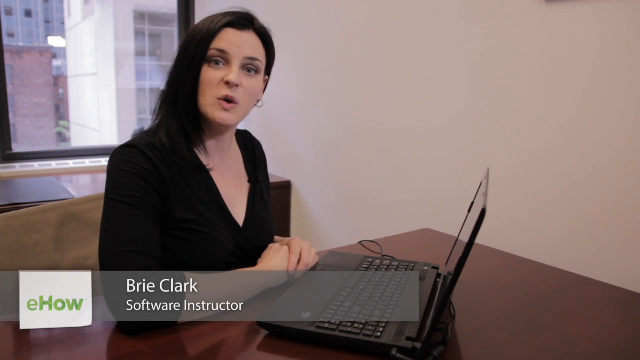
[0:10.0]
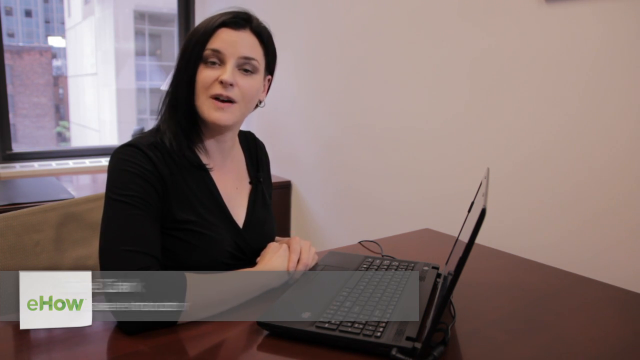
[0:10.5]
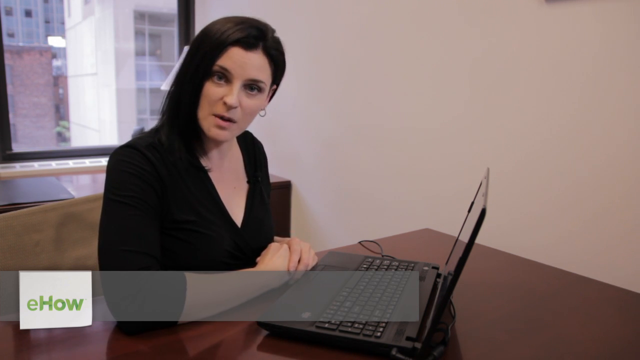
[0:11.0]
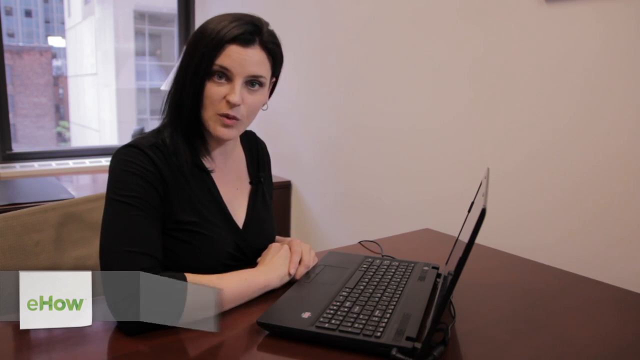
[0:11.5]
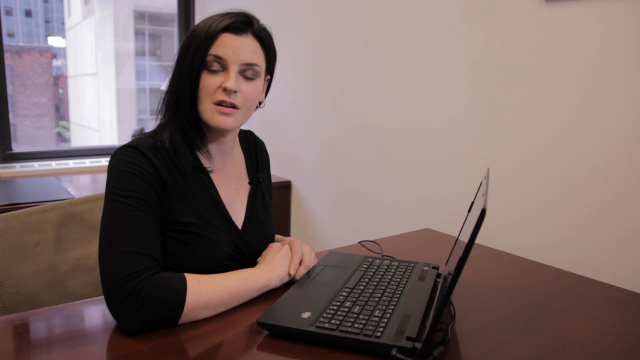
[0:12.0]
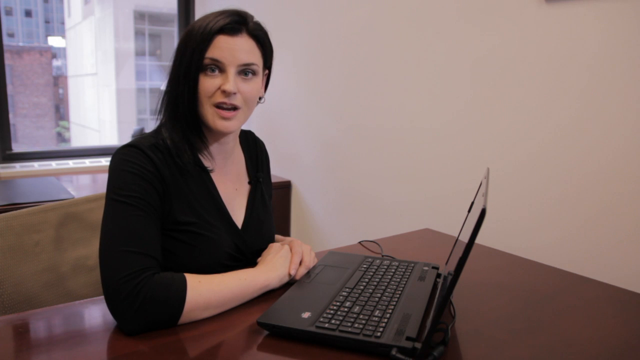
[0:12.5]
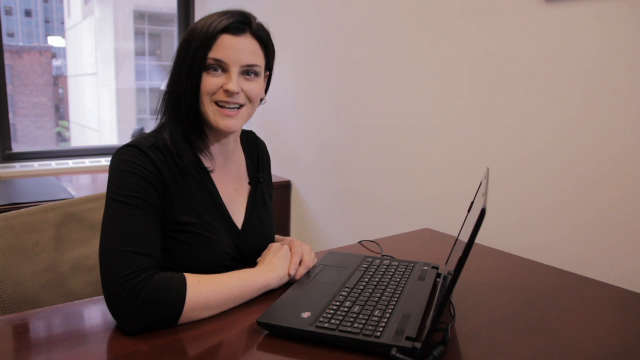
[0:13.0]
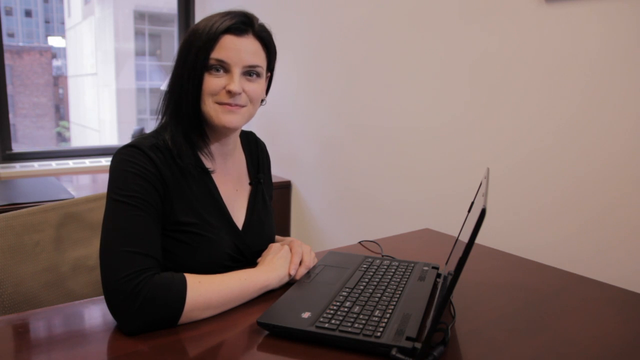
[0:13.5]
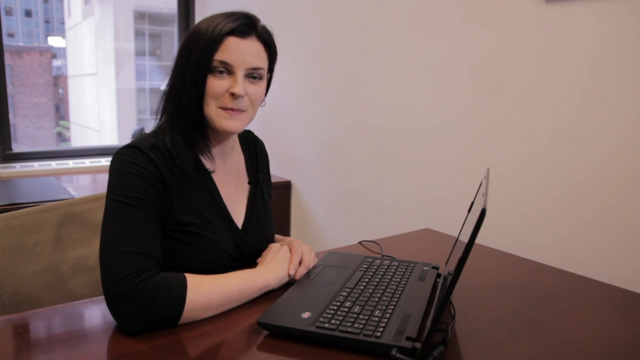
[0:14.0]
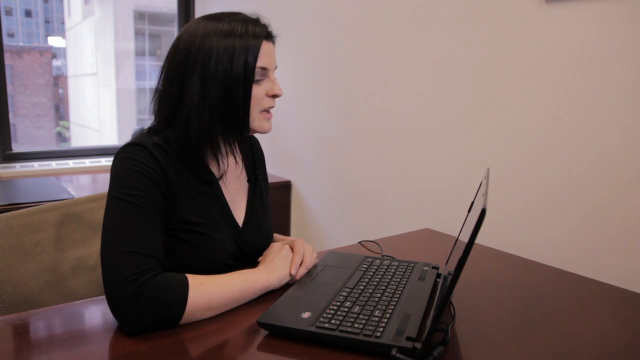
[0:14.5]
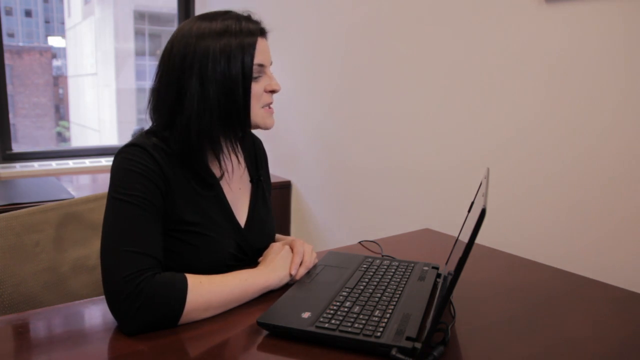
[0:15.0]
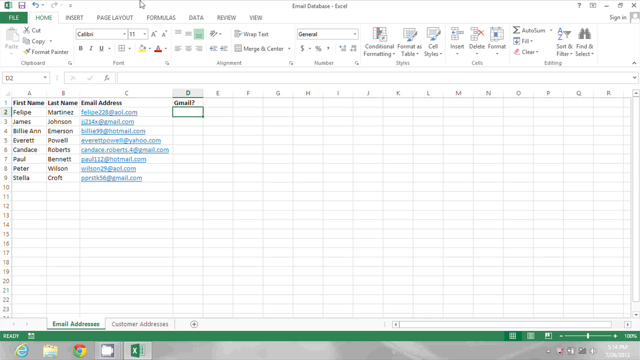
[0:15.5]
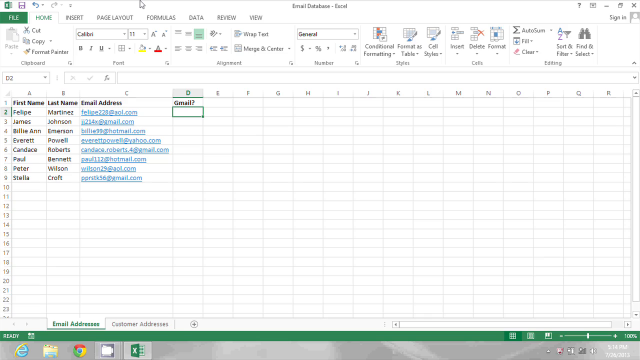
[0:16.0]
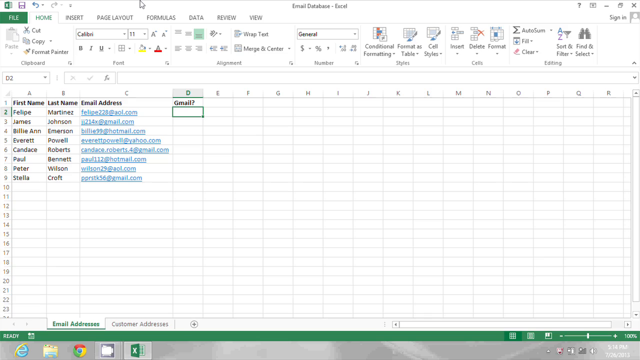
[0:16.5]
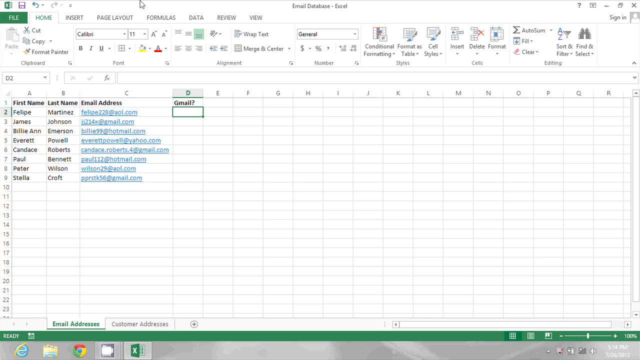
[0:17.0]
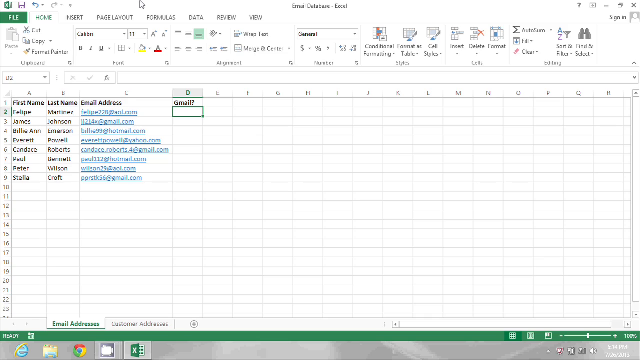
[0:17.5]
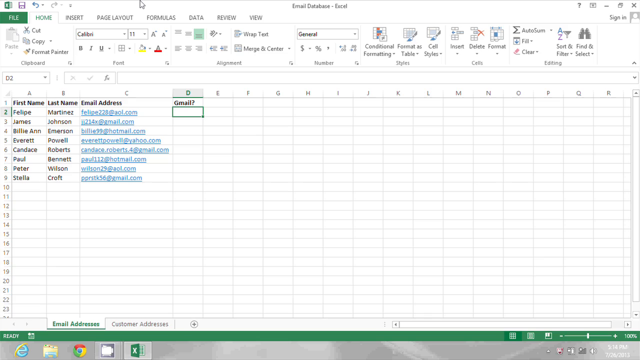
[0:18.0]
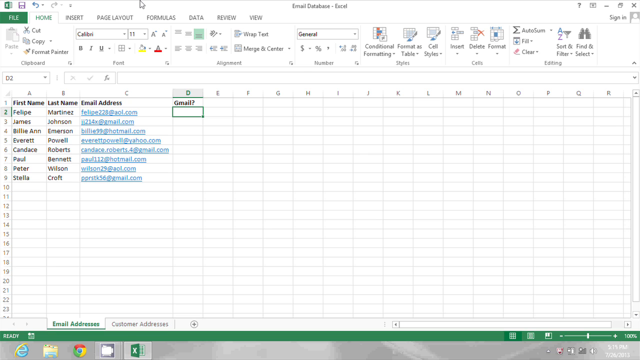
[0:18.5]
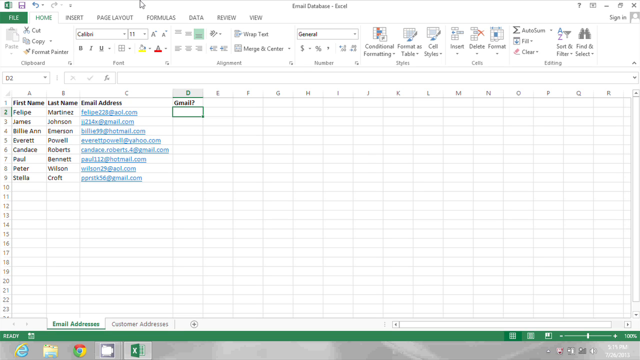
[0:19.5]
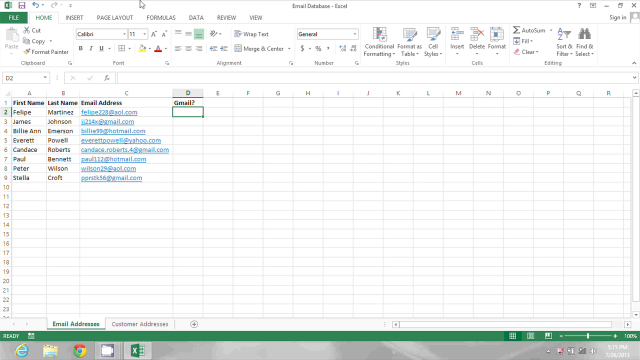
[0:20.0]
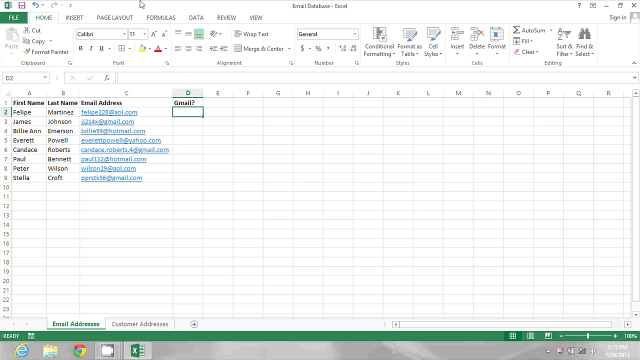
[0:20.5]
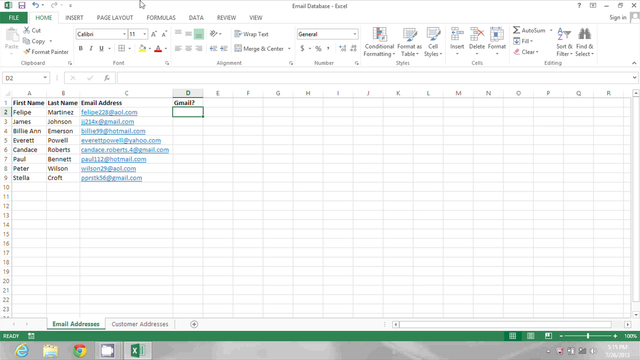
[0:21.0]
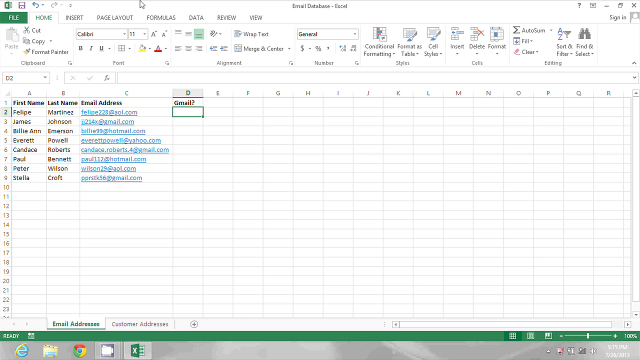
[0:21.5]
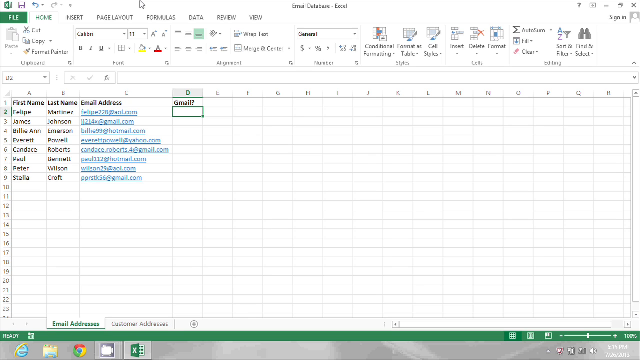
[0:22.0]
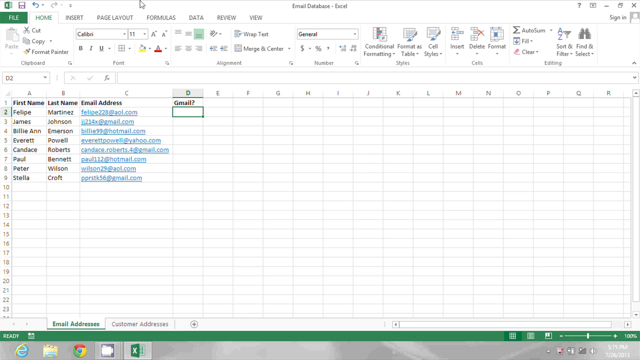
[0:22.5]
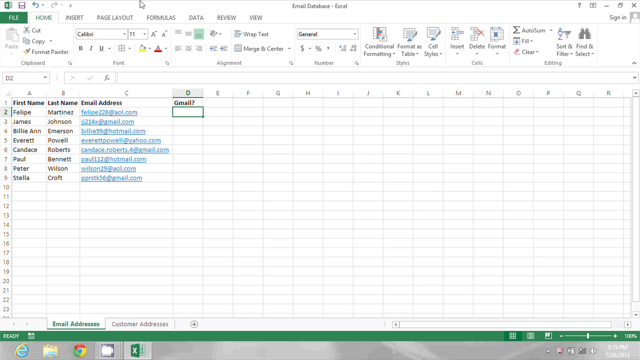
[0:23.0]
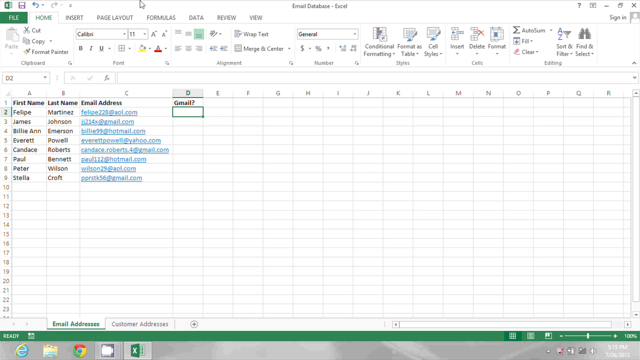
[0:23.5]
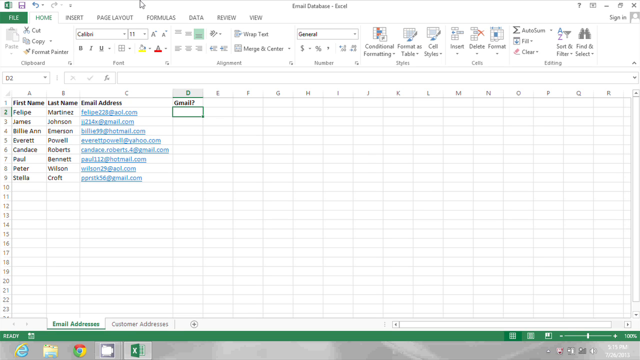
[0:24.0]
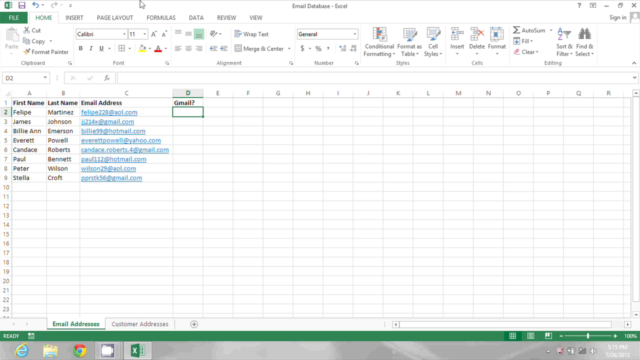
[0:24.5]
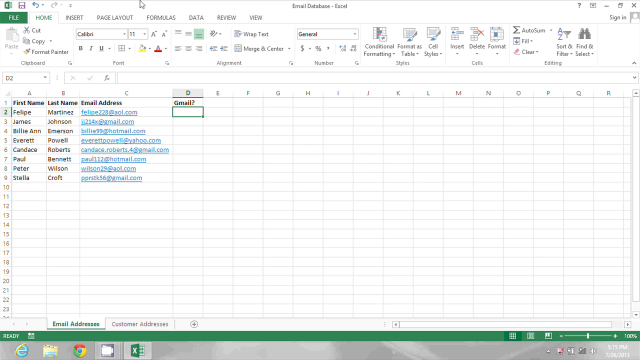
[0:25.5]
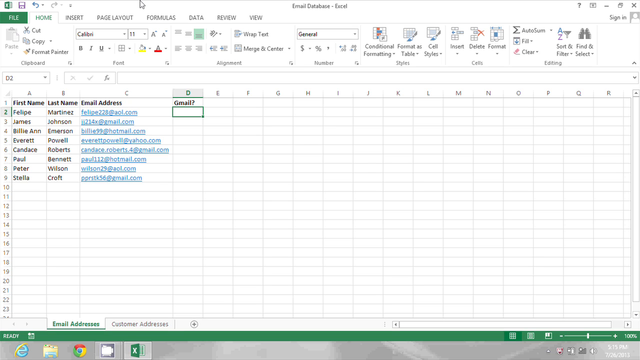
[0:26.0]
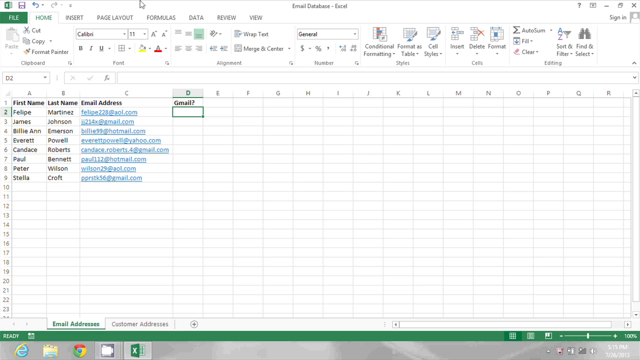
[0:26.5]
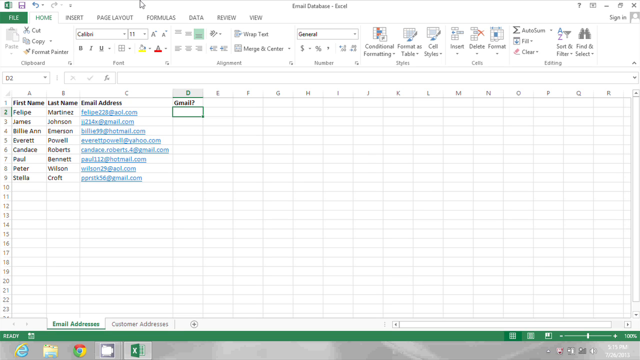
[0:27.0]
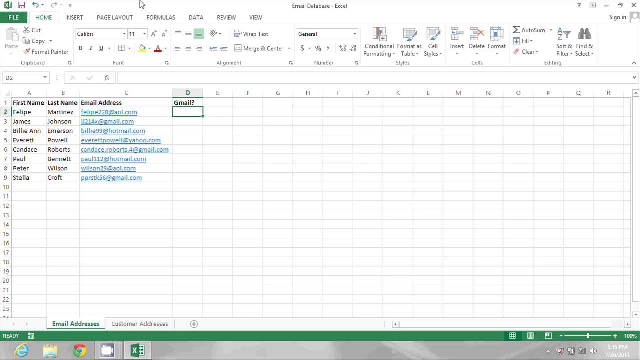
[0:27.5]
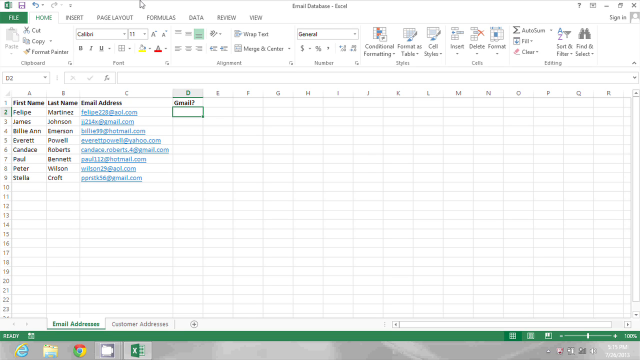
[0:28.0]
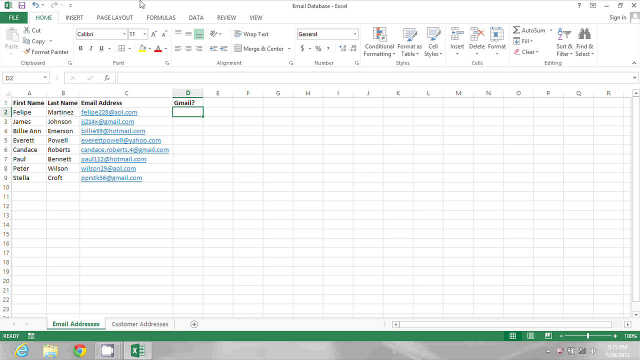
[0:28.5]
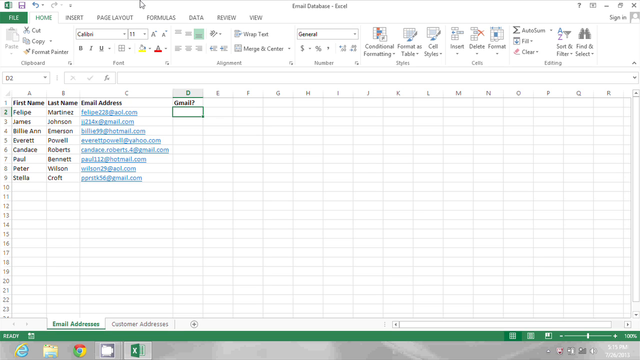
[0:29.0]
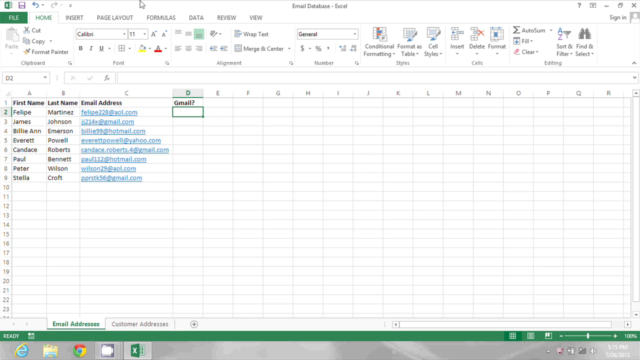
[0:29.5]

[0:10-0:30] A woman sits behind a desk with an open laptop in an office setting. Text at the lower part of the screen gives her name and says she is a software instructor. She is turned sideways, looking at the camera and talking. Eventually she looks at the software running on the computer, which appears to be an Excel document named "email database - Excel". The columns are titled first name, last name, email address, and, in column D, Gmail followed by a question mark. Columns A through C contain information going down to row nine, with first names, last names and email addresses entered in rows two through nine, but nothing is filled in under column D.